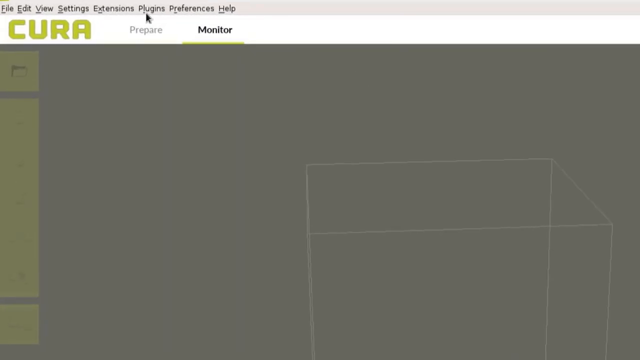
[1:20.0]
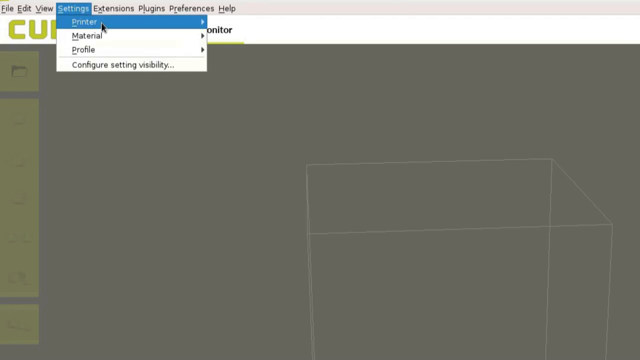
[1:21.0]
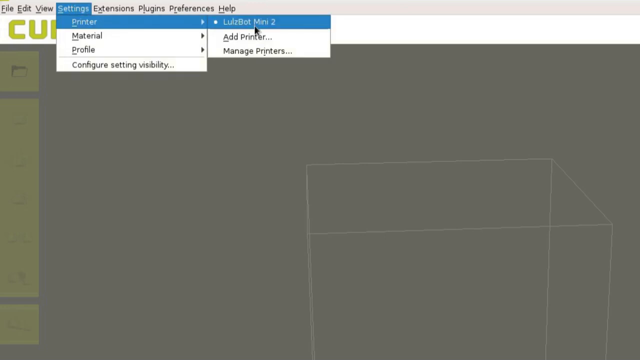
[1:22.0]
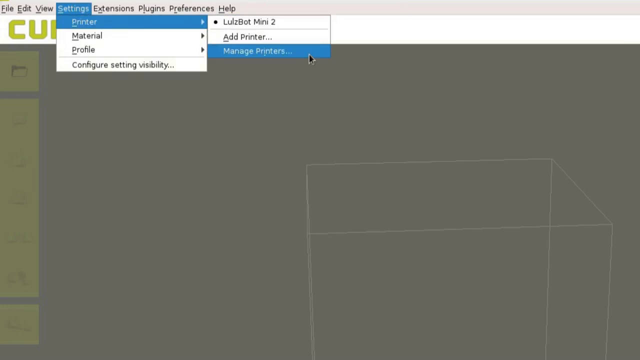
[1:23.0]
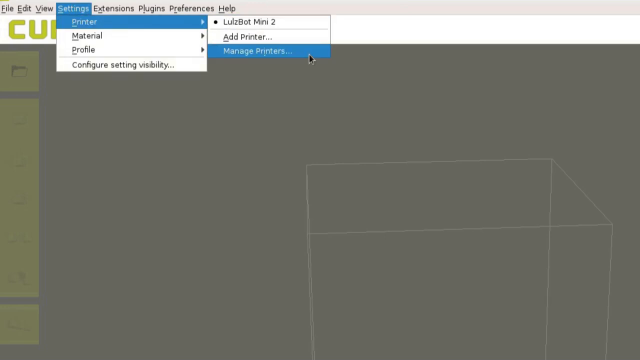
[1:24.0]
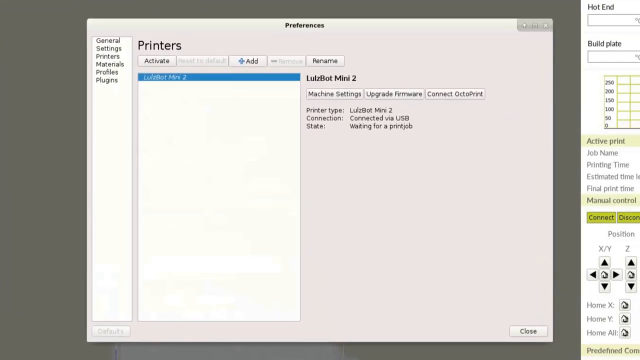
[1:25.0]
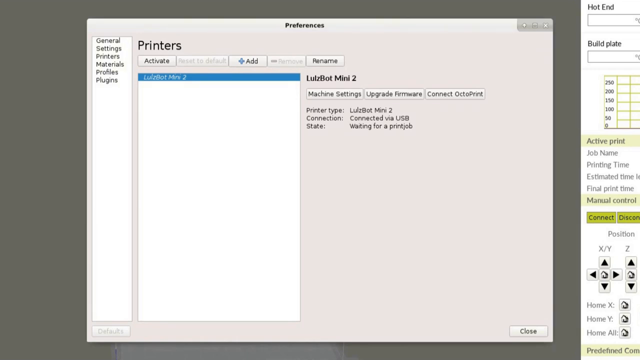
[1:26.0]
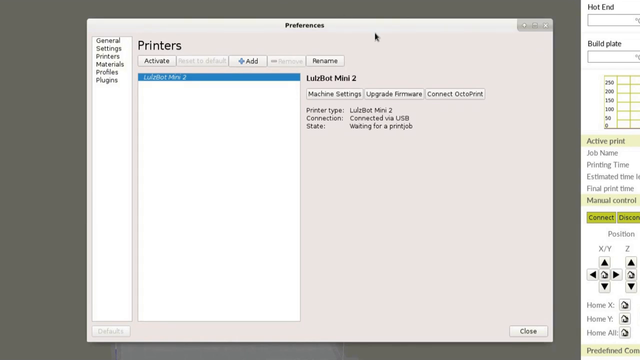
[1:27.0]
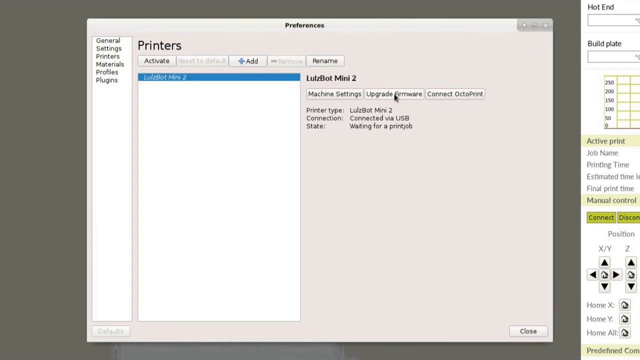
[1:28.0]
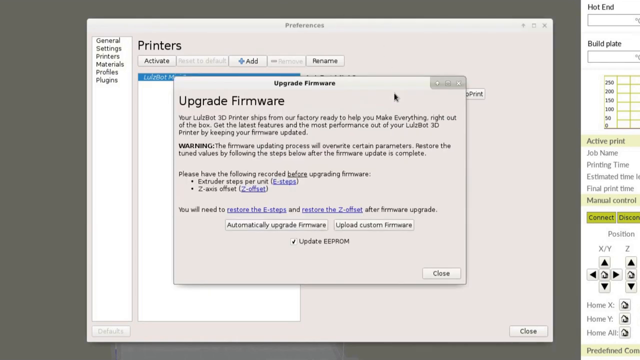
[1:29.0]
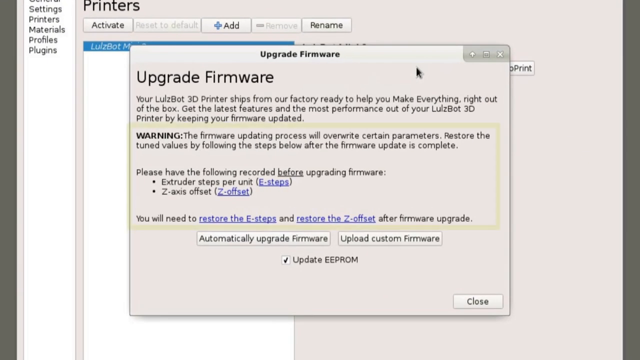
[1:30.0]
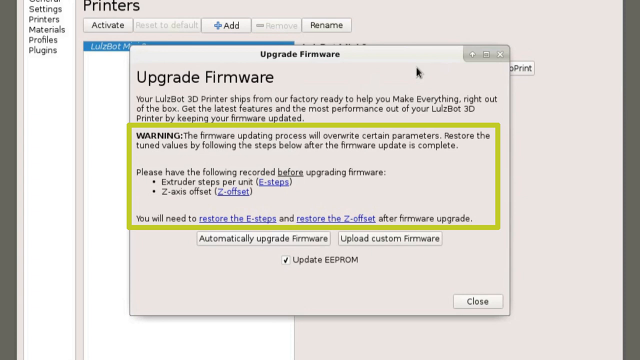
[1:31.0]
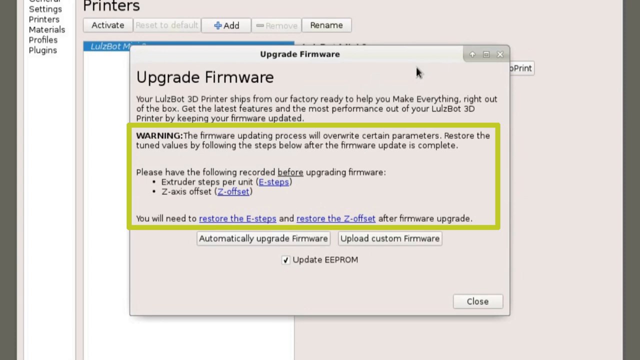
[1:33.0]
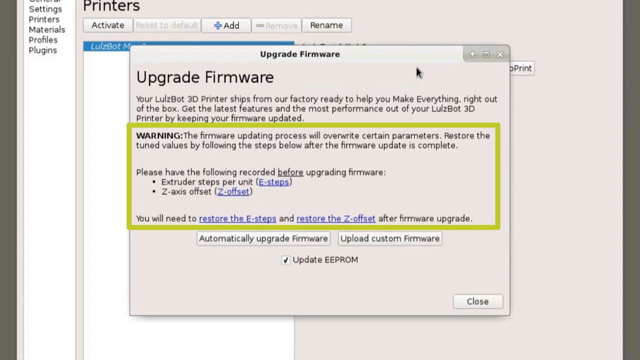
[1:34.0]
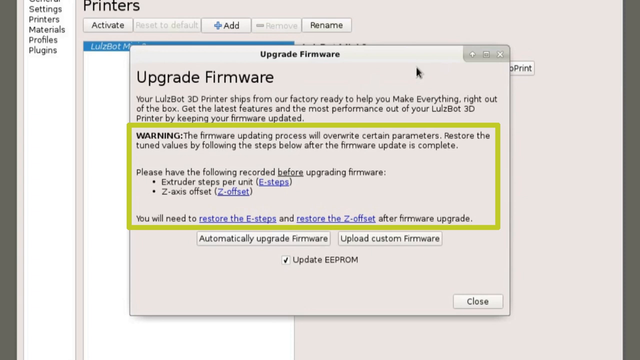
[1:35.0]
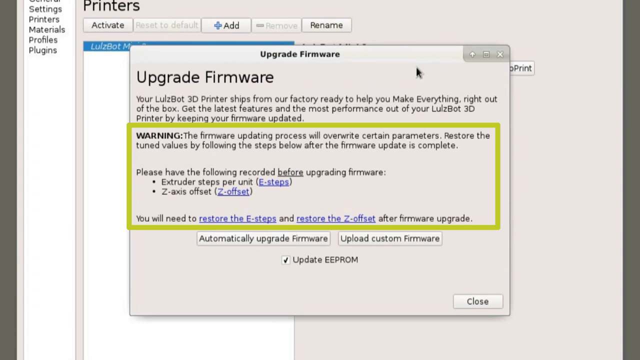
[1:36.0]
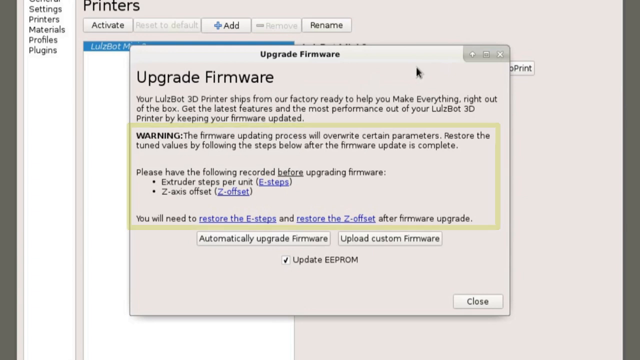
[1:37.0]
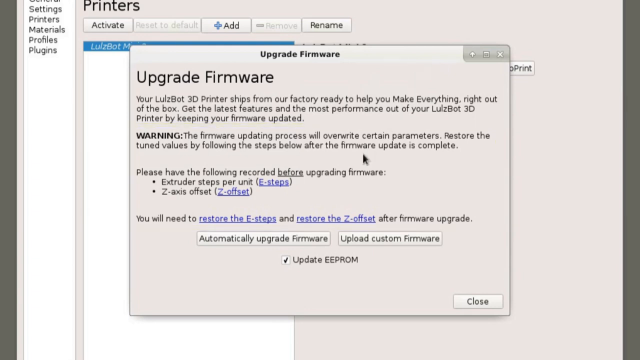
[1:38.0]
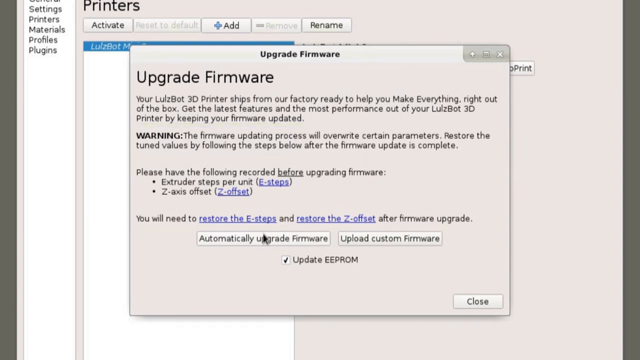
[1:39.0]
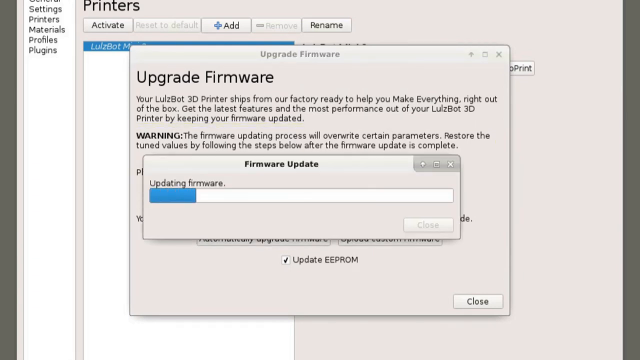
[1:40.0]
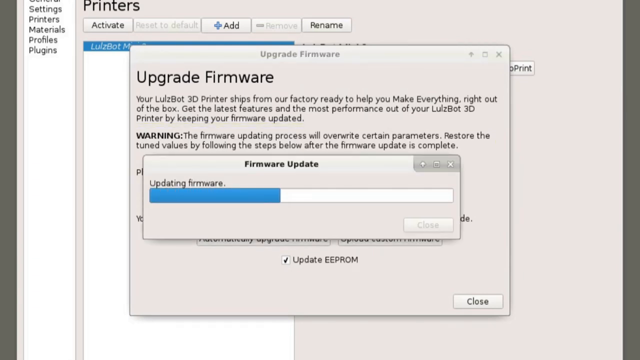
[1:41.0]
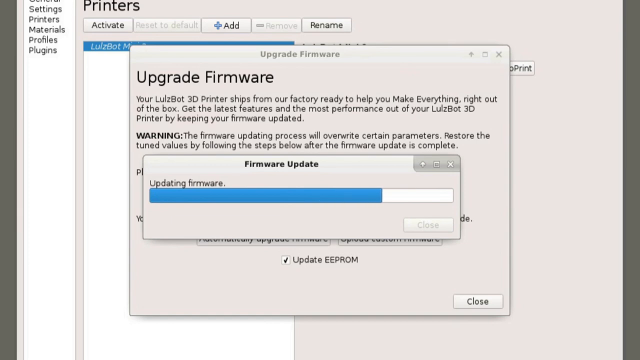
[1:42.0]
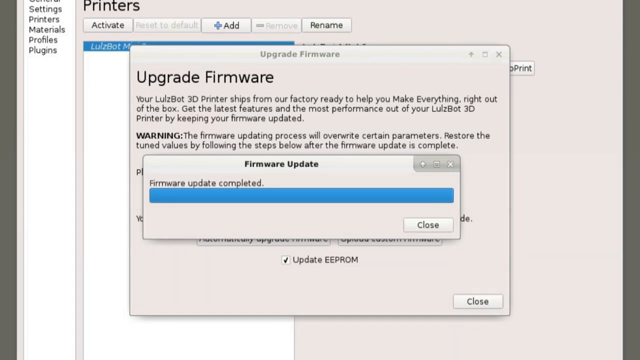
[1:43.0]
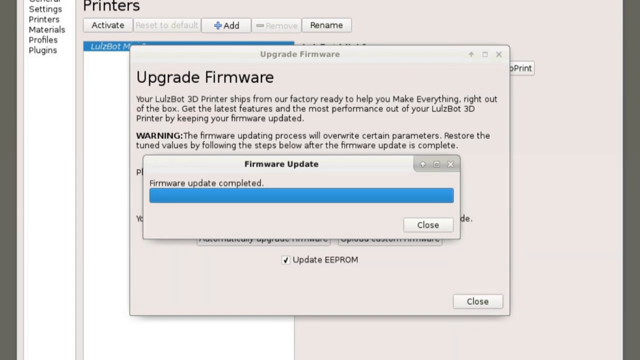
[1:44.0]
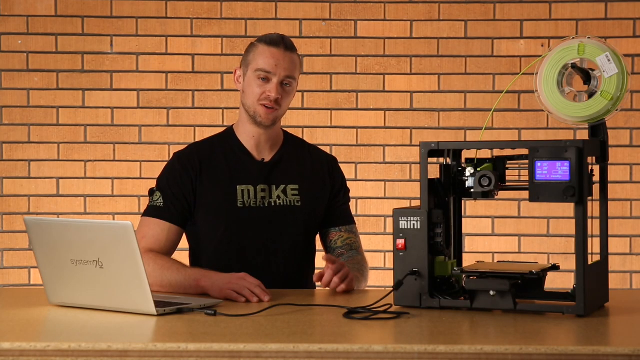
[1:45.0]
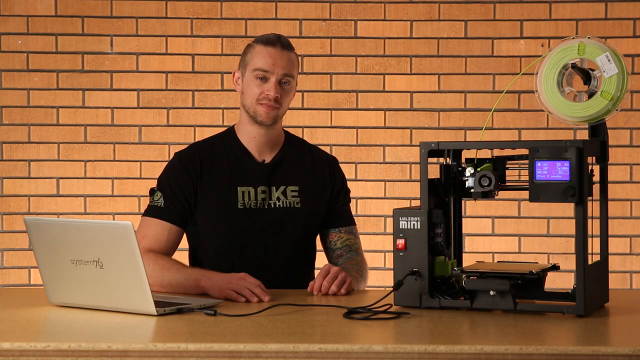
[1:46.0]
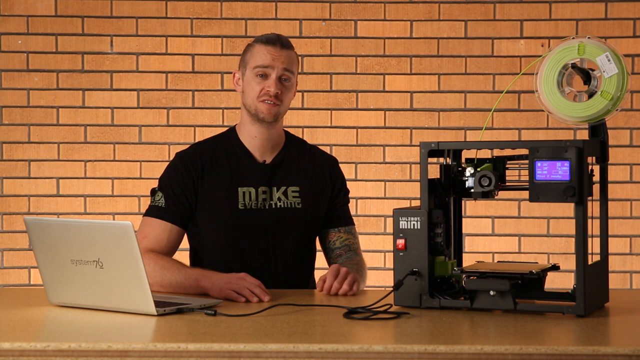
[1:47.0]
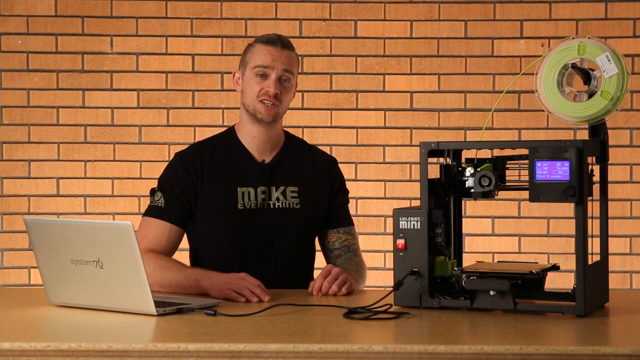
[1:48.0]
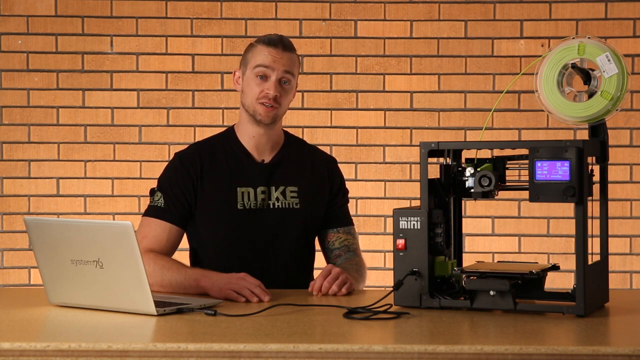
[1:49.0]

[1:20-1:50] Manage printers is selected from the menu and the printer preferences screen opens. The selected printer is the LulzBot Mini 2, with buttons underneath including upgrade firmware and connect OctoPrint. The user clicks Upgrade Firmware with the mouse cursor. A message advises that you can get the latest features and the most performance out of your 3D printer by keeping your firmware updated, followed by a warning: "the firmware updating process will overwrite certain parameters. Restore the tuned values by following the steps below. Please have the following recorded before upgrading firmware, E steps and Z offset." The user clicks Automatically Upgrade Firmware, and the firmware update takes about two seconds. The man in the "Make Everything" shirt then appears standing or sitting next to the table.